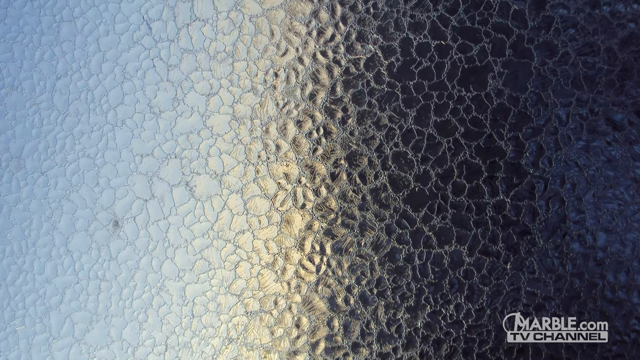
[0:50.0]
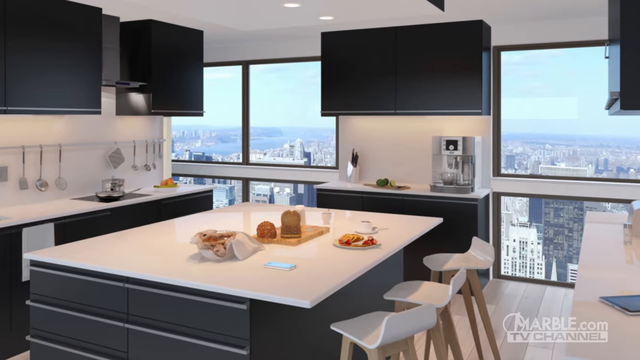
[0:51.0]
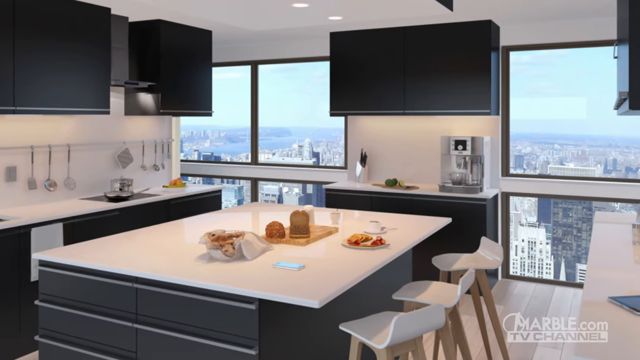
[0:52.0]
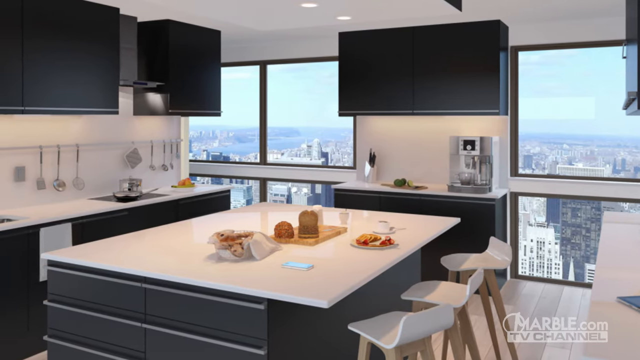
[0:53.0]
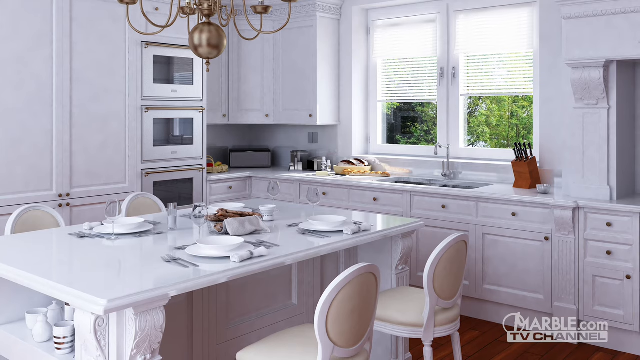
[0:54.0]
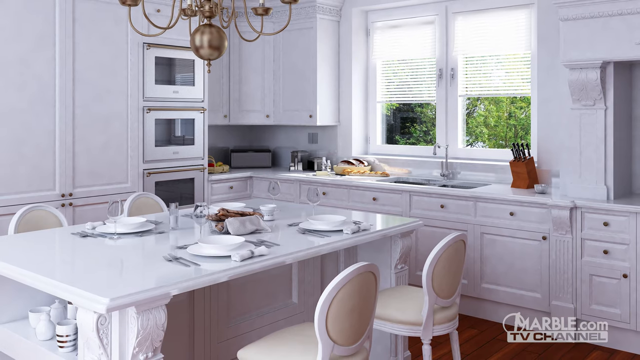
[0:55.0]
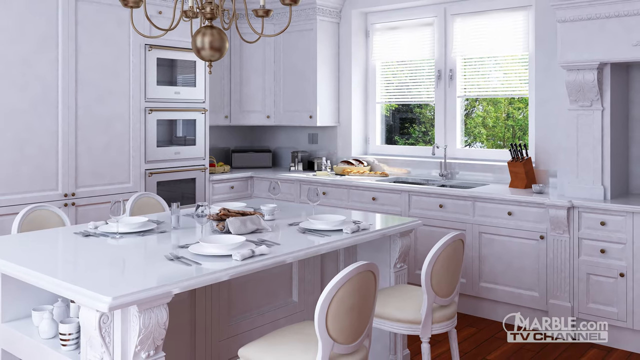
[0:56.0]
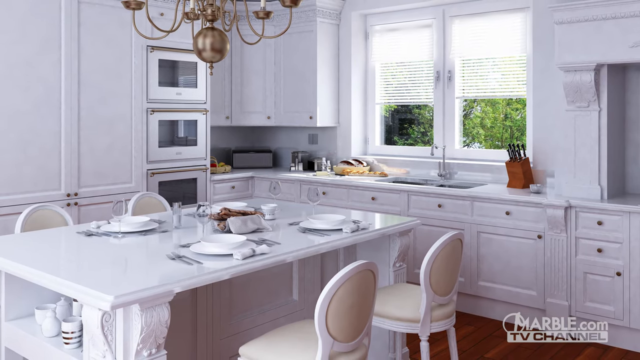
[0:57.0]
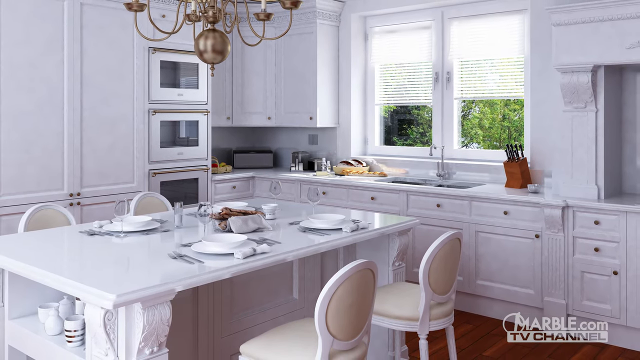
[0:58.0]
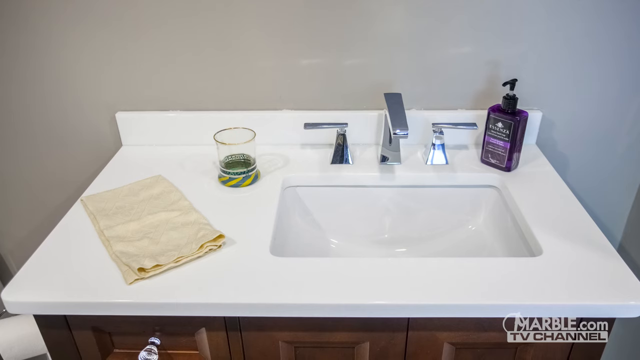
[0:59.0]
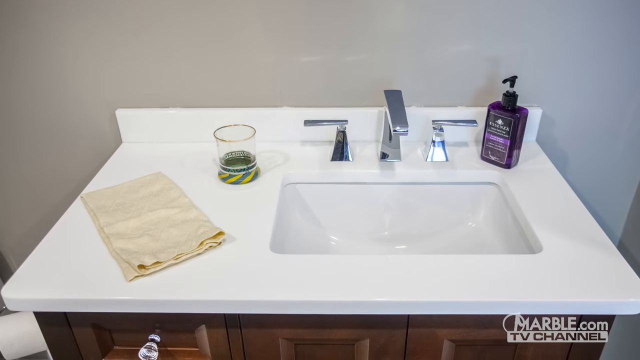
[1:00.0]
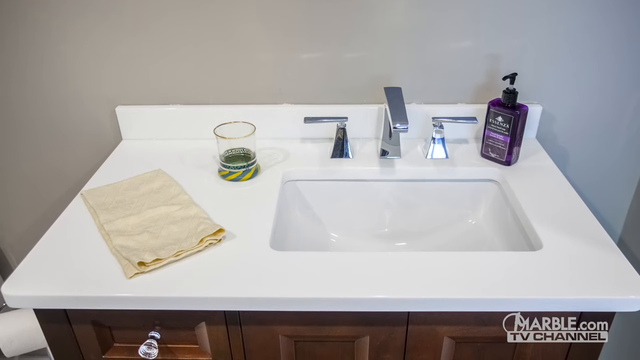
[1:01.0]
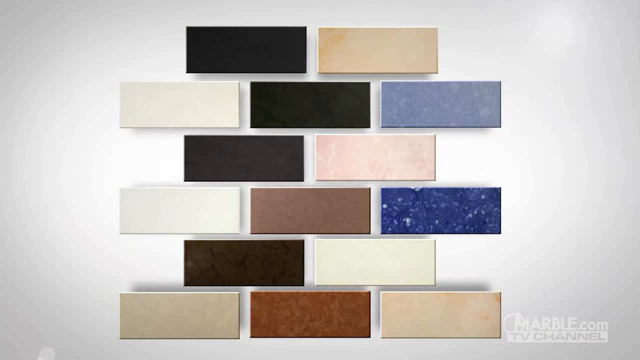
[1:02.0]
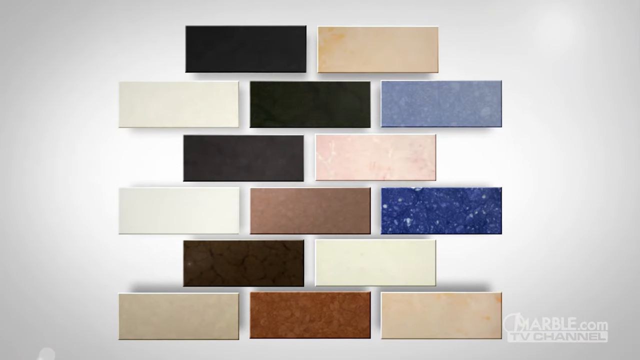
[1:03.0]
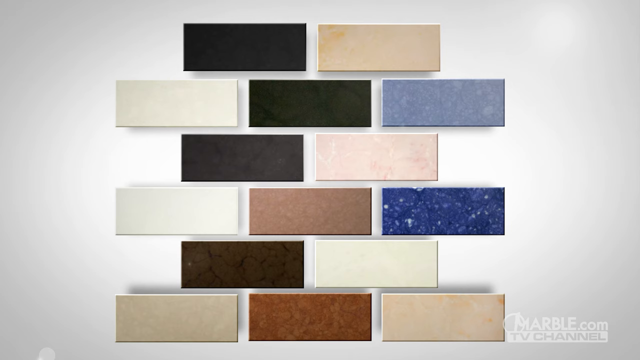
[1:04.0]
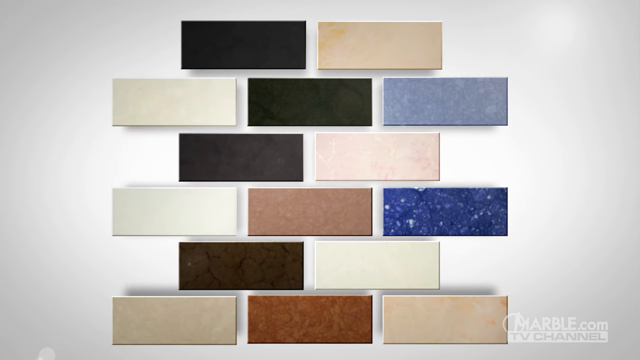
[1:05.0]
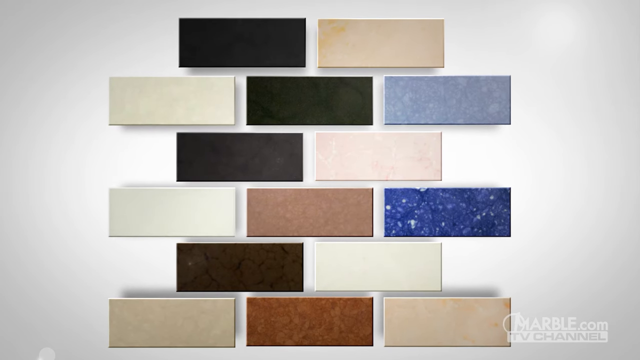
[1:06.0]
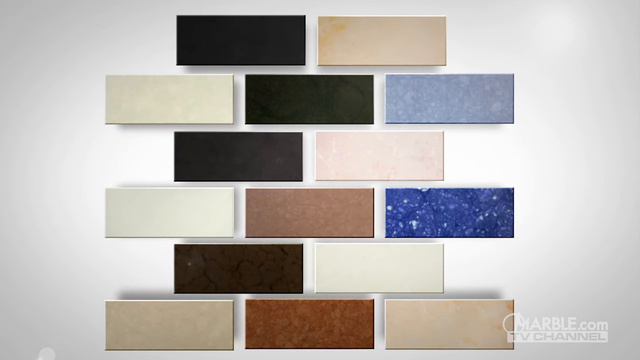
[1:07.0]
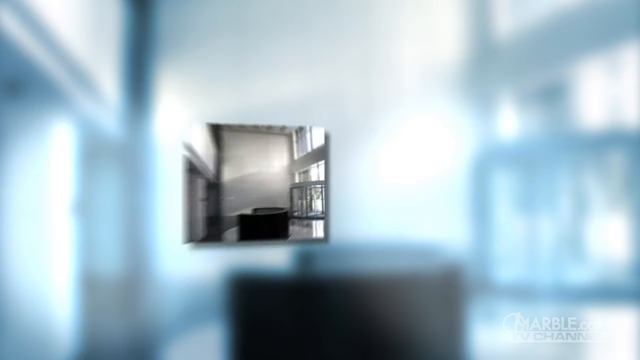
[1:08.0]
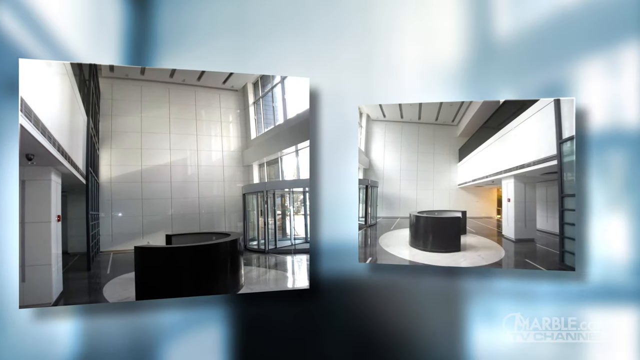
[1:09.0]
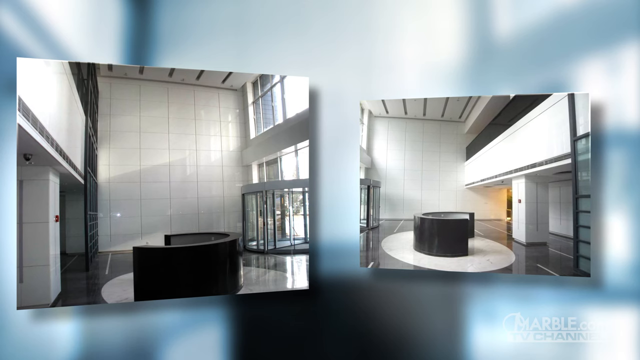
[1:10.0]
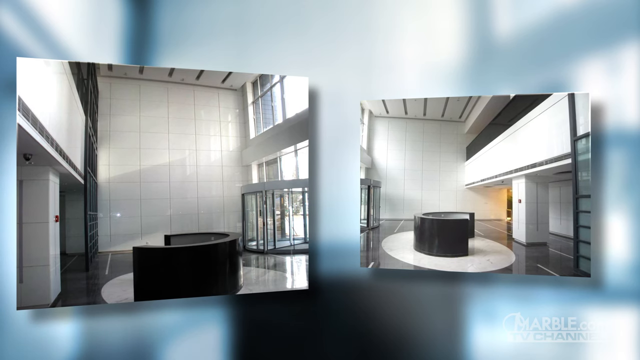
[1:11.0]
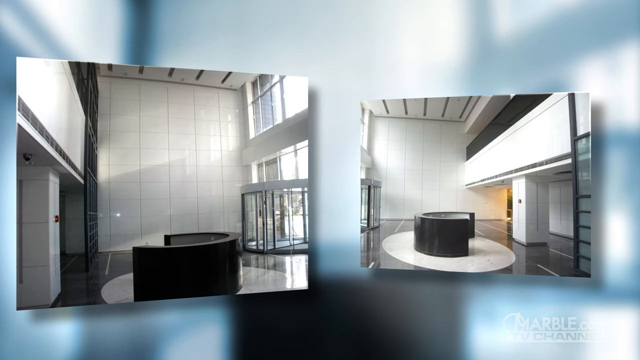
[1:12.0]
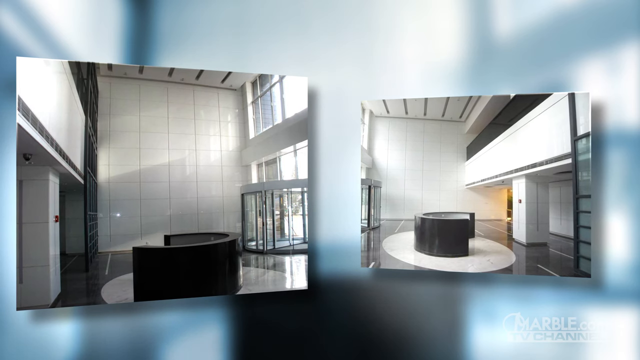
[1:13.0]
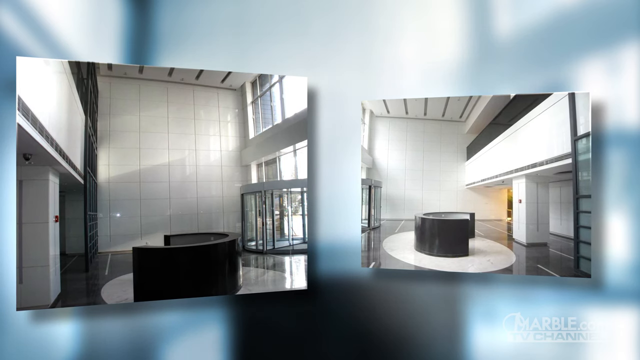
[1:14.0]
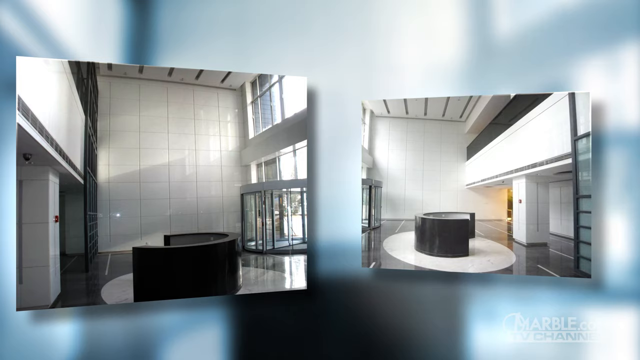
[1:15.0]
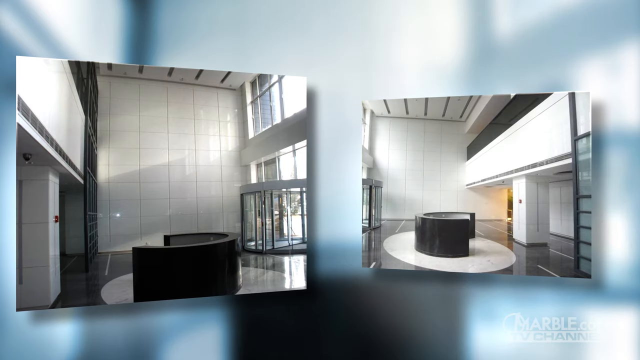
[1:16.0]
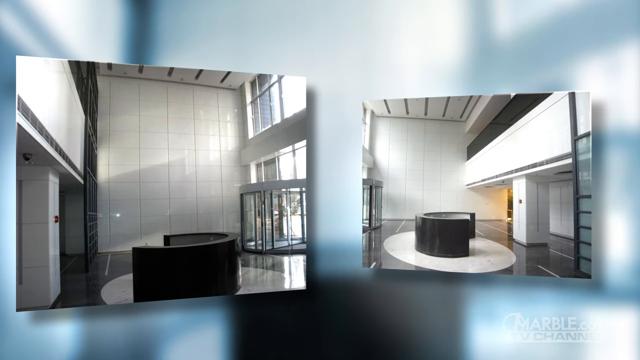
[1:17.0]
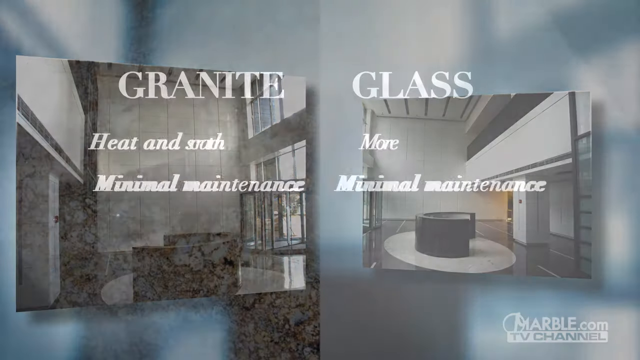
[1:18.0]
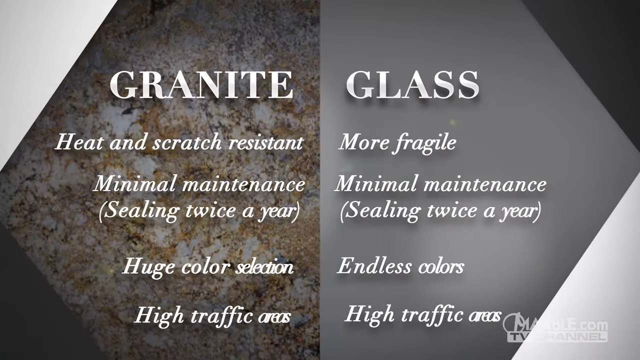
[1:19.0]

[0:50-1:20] A simple-style kitchen in white and black is shown: the bottom is all black, the middle all white and the top all black. Another, whiter style follows, without the black parts, with white above and below. A white granite sink is shown, very clean, with a metal opener for hot and cold water that turns to the left and to the right, liquid soap on one side, a glass on the other, and a cleaning cloth; the person who owns it seems to be well organized.